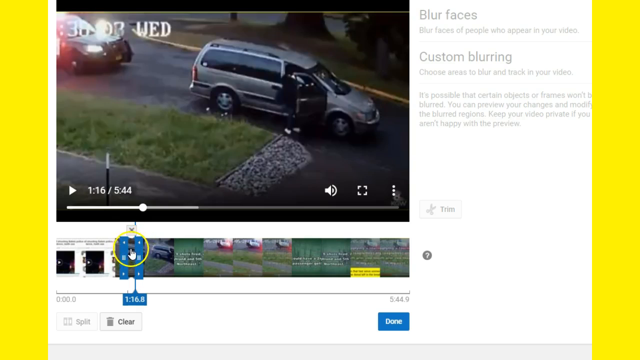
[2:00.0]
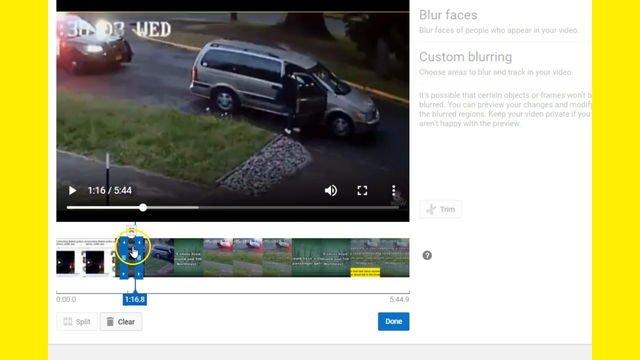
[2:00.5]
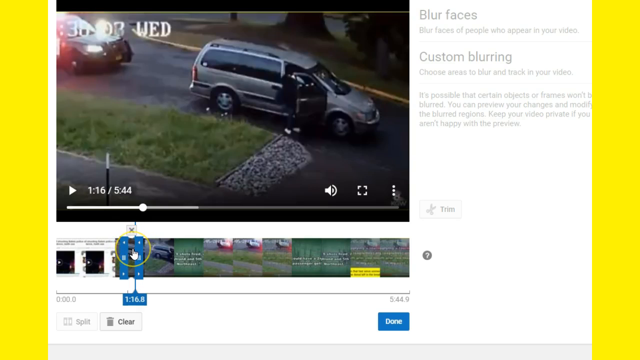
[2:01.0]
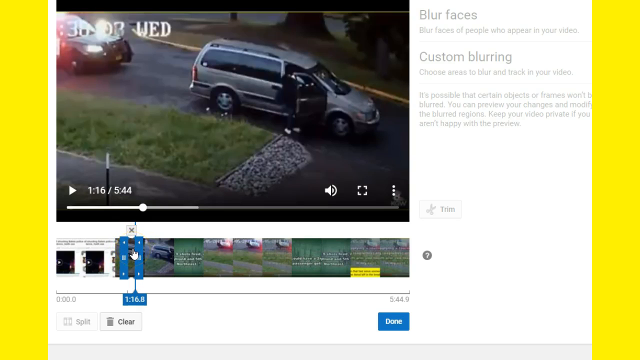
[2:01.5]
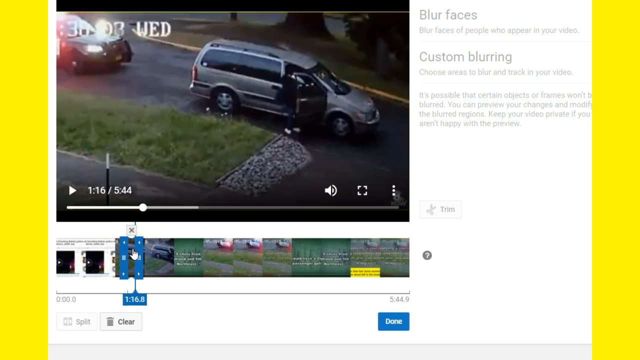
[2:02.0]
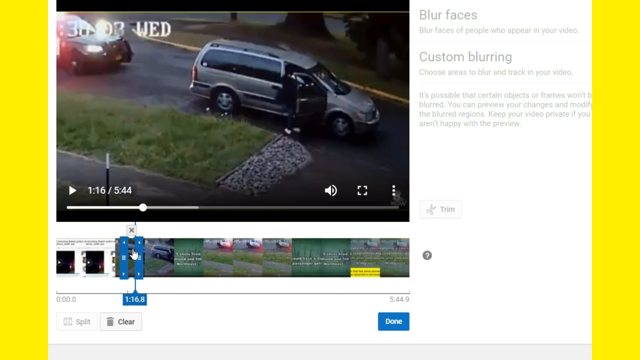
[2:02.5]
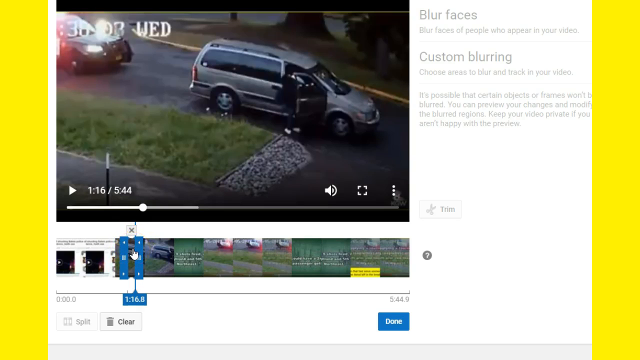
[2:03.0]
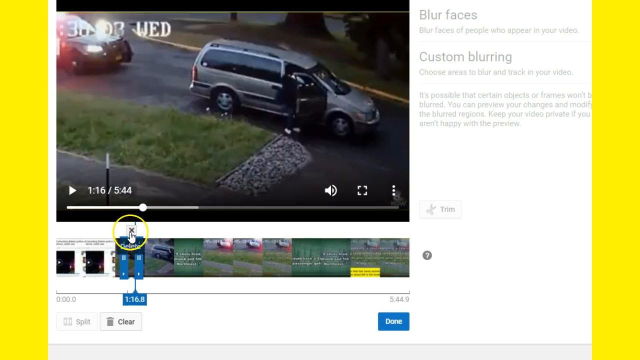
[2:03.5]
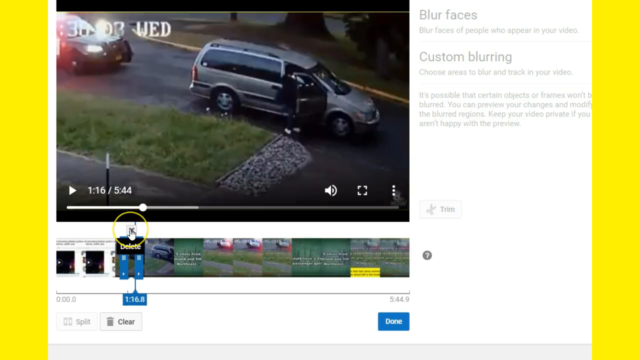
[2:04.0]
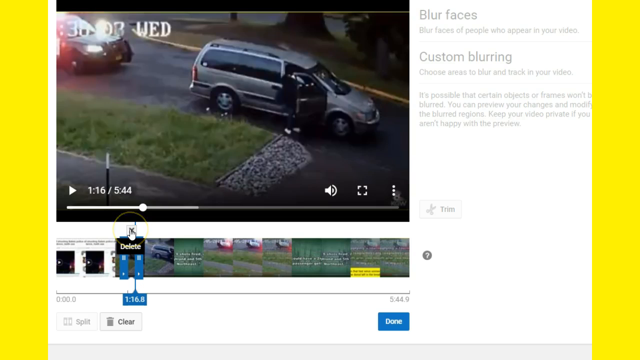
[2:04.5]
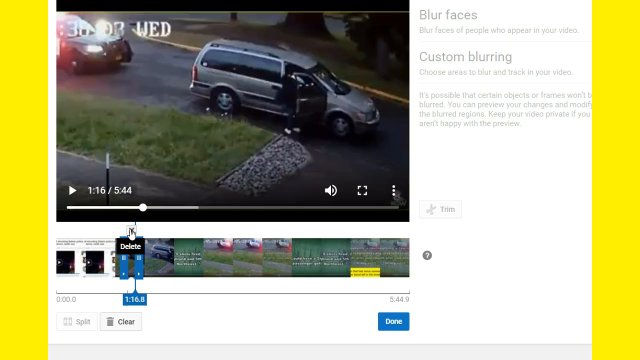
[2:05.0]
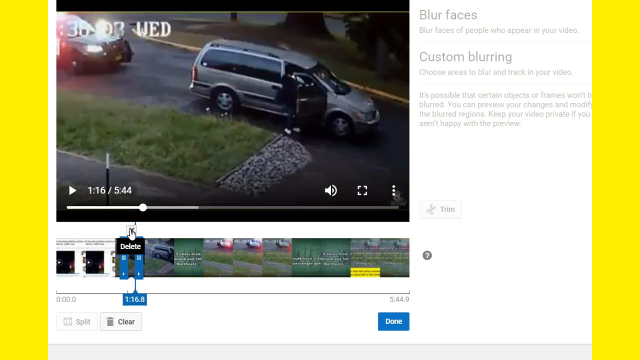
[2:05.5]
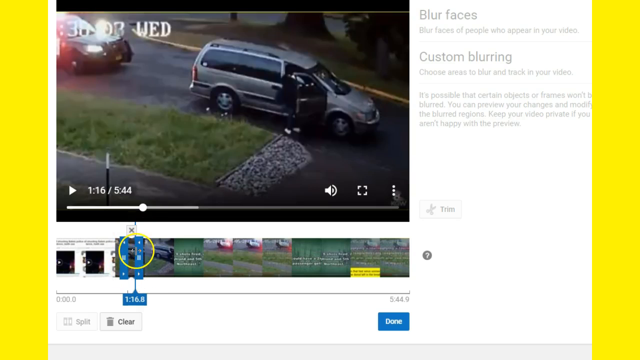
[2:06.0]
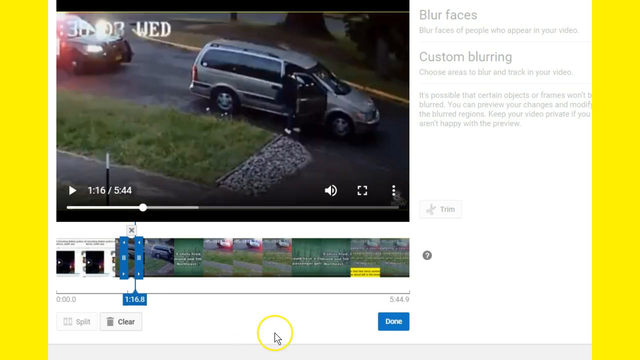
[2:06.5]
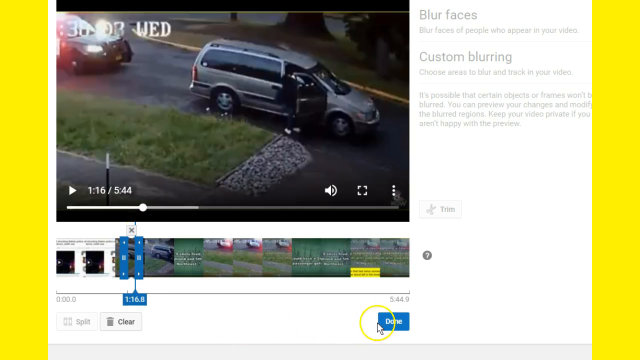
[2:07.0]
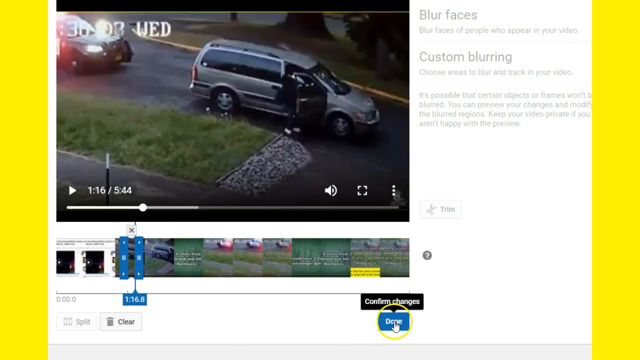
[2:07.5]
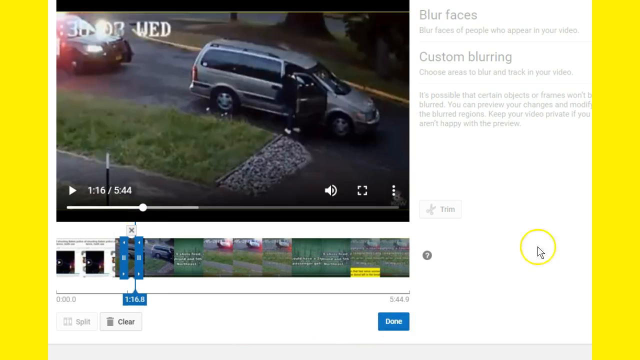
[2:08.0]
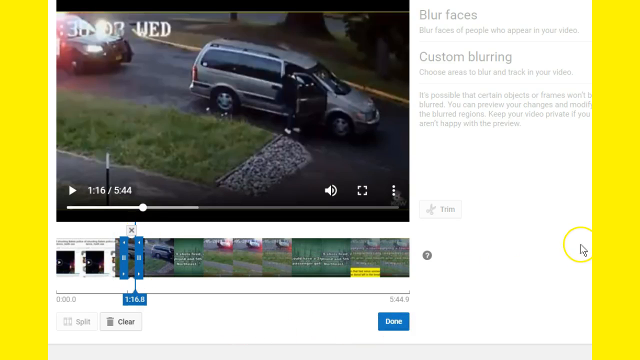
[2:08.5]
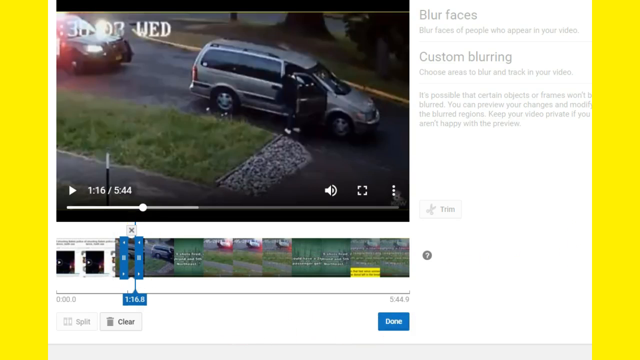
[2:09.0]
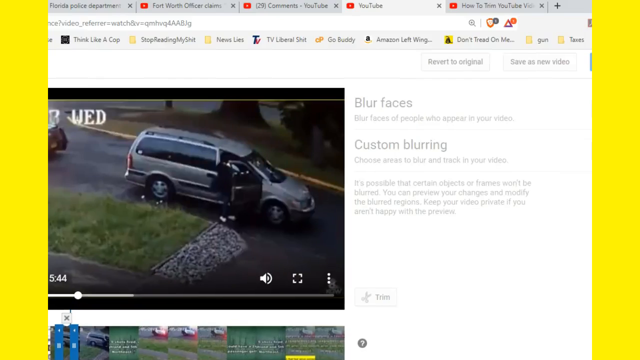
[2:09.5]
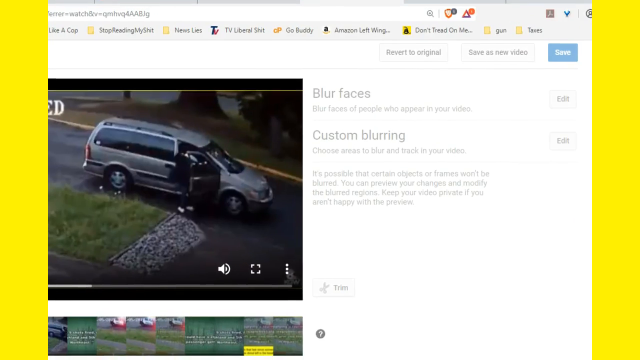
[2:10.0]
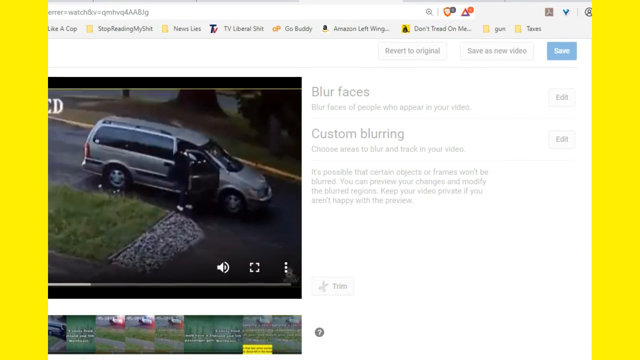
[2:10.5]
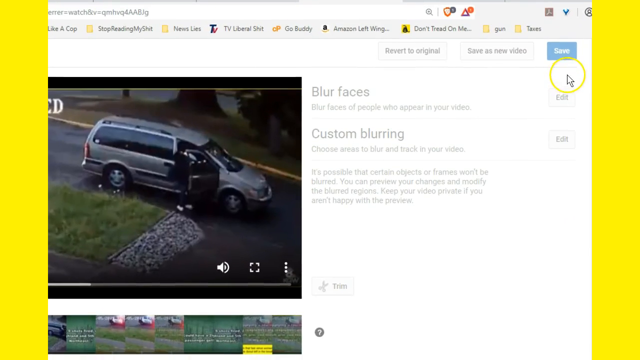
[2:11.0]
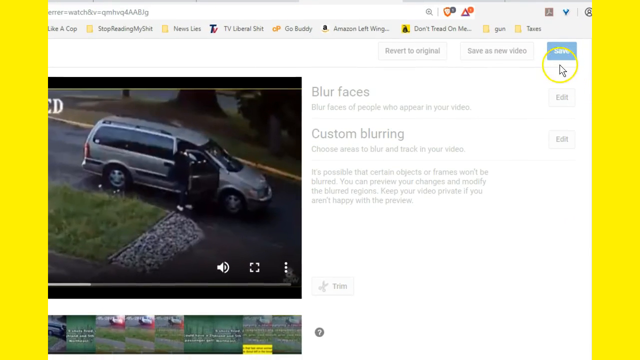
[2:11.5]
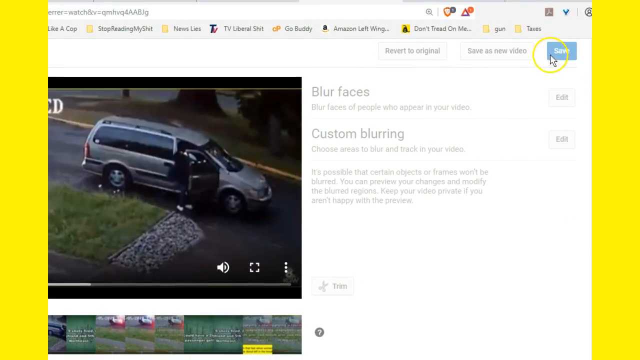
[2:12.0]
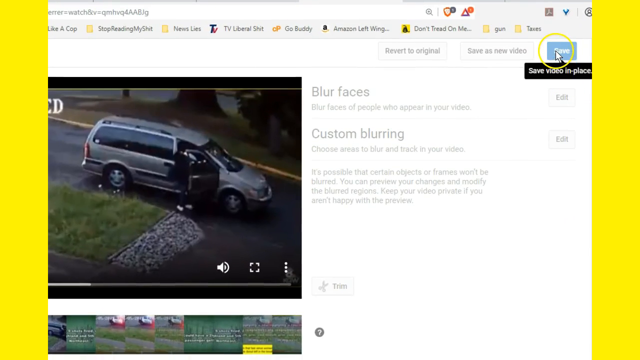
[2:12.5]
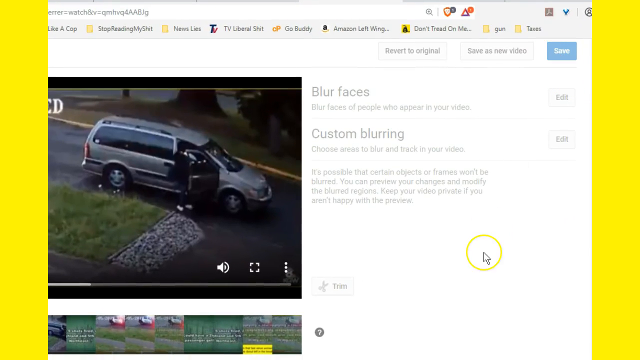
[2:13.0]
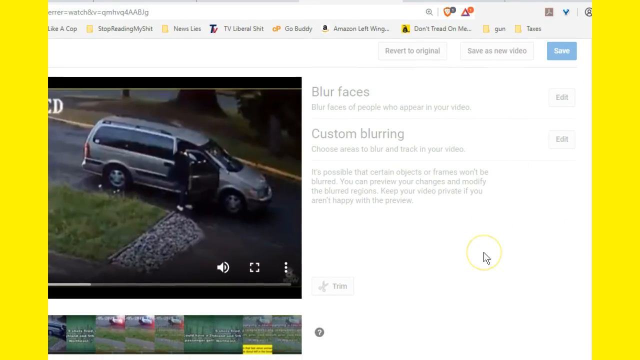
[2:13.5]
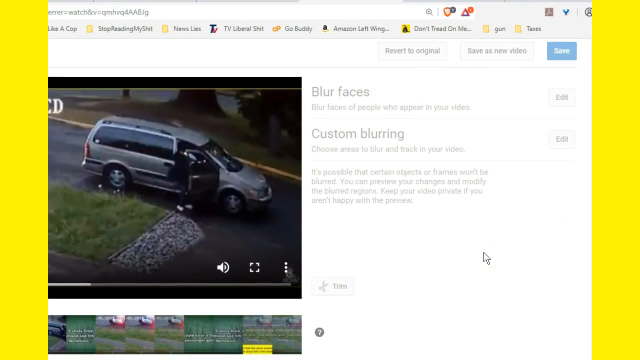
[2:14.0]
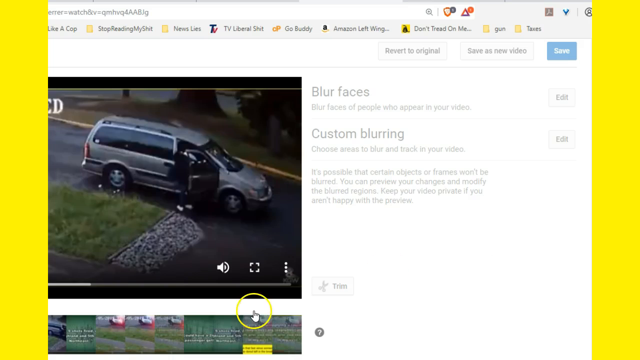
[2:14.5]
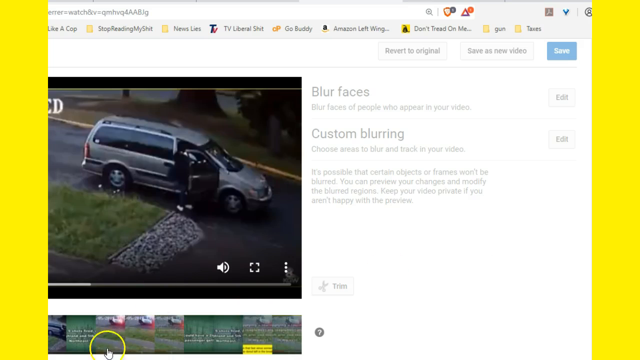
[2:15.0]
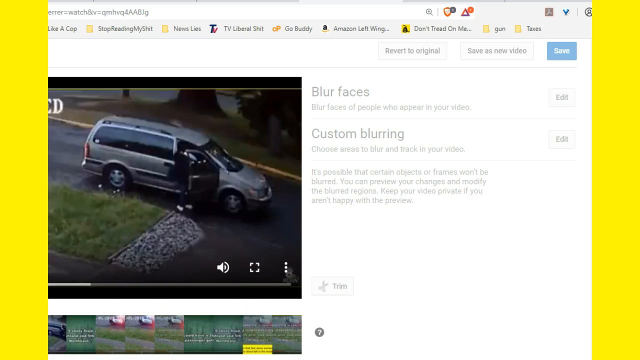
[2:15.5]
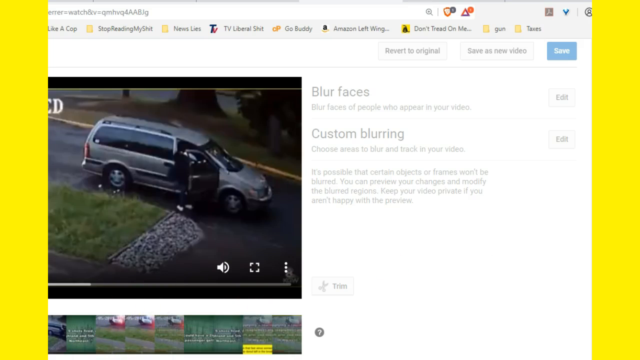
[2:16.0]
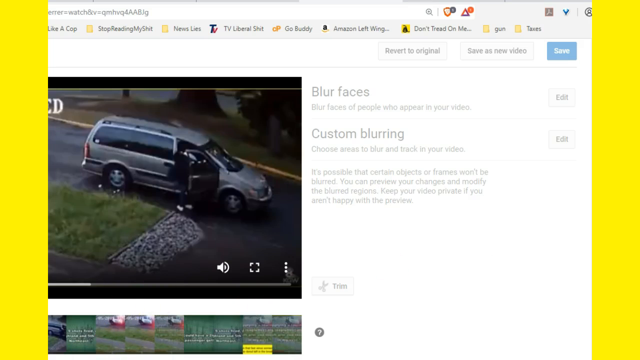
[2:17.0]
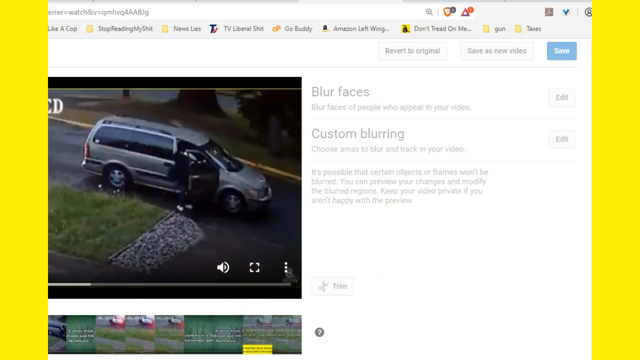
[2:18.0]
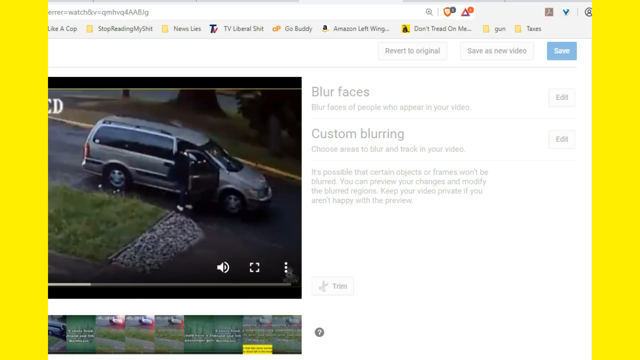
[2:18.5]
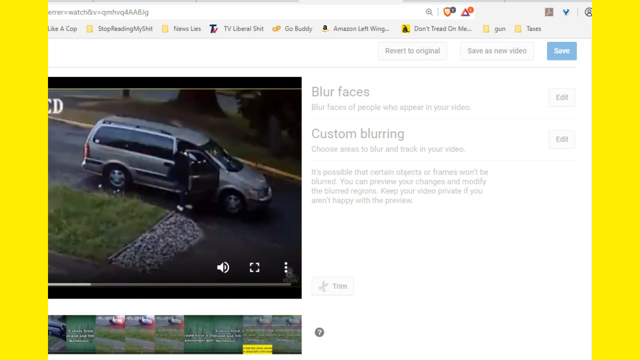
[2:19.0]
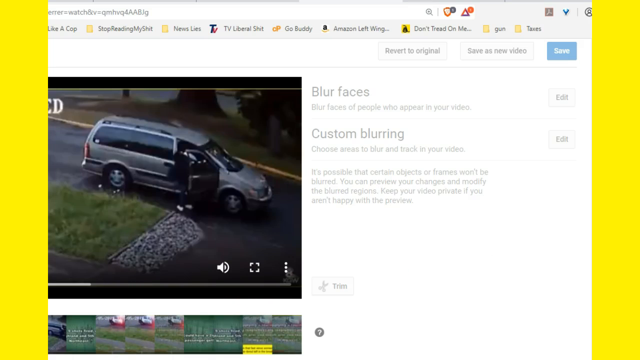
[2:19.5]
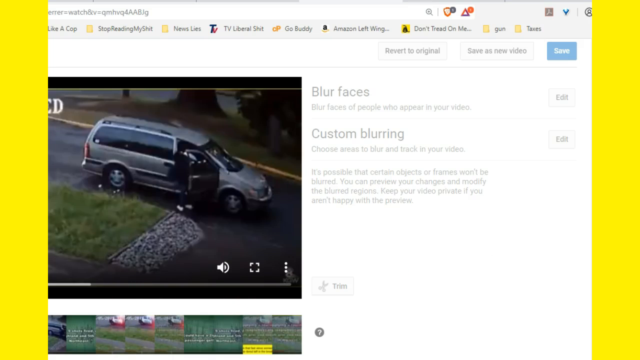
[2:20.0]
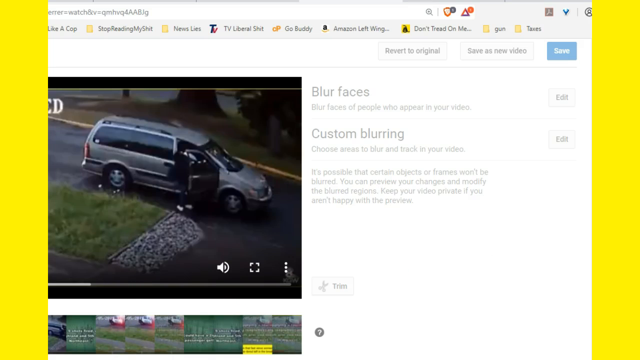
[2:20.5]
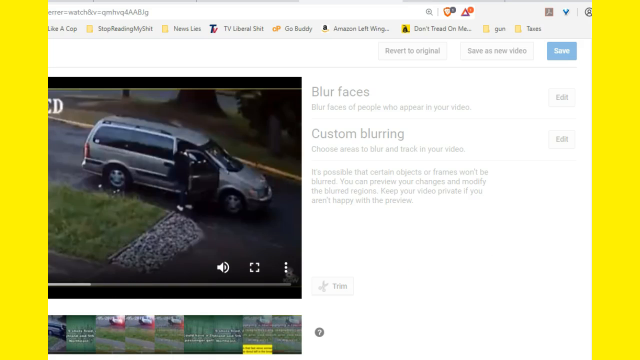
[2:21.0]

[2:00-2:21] The mouse cursor moves and stops on two blue lines, then stops where it says "done," stops at another unclear spot, and then goes to the corner where there is a share button. The video still shows the same image of the cars: a police car at the back and a silver car with open doors.